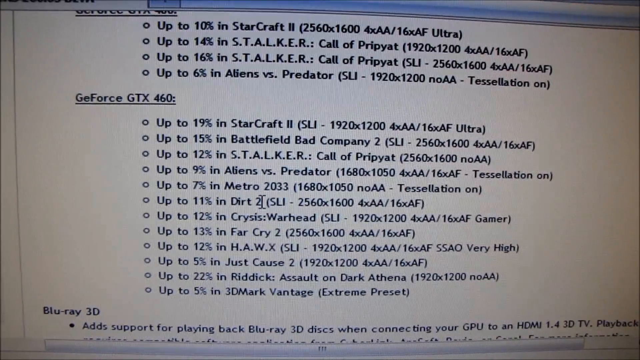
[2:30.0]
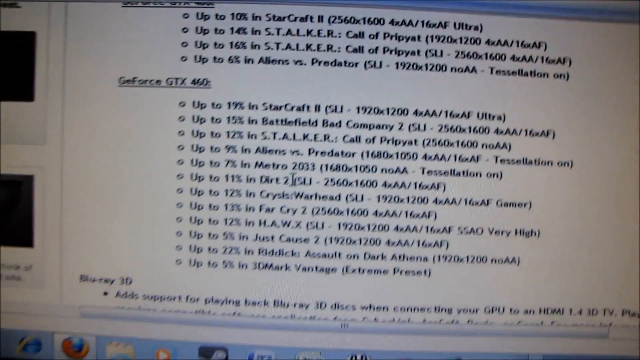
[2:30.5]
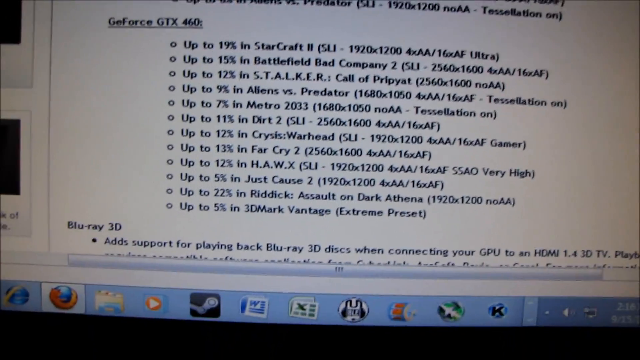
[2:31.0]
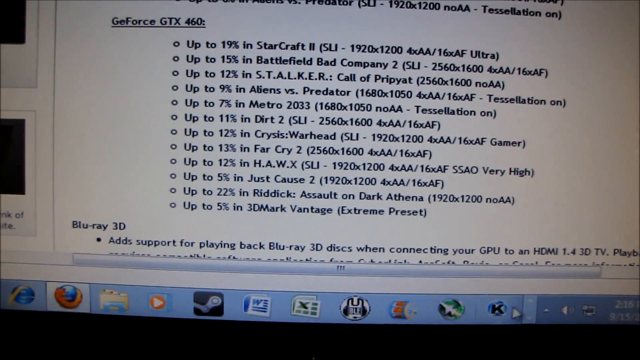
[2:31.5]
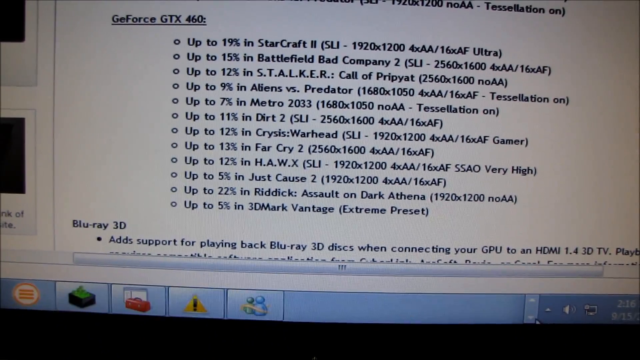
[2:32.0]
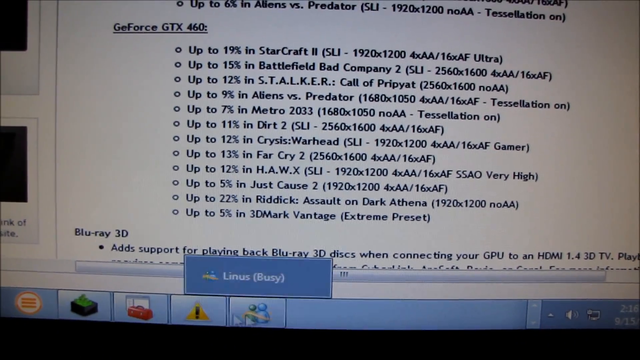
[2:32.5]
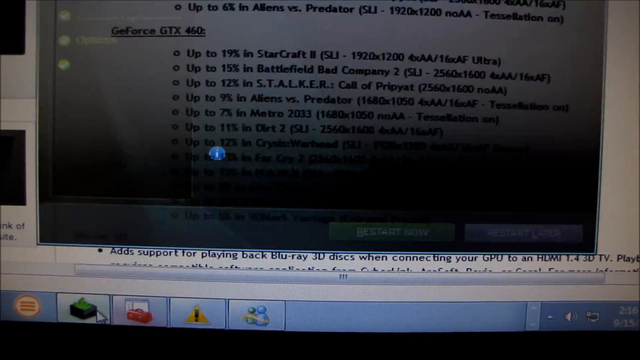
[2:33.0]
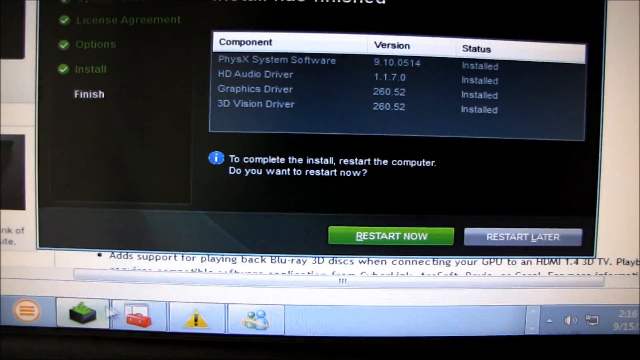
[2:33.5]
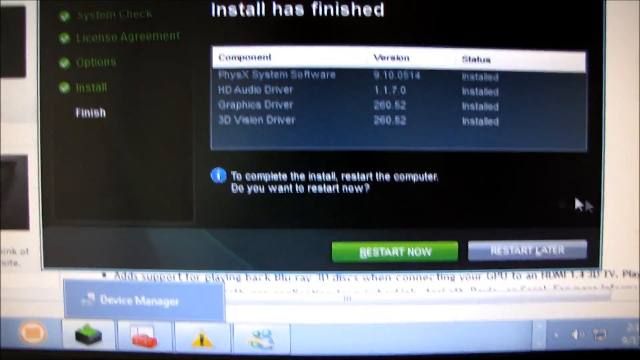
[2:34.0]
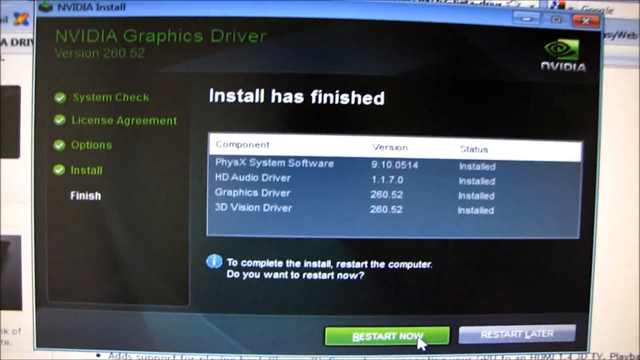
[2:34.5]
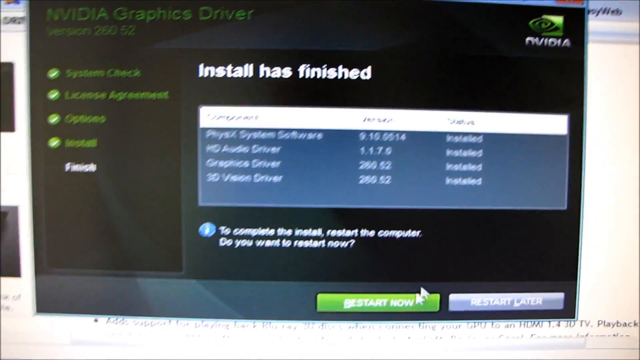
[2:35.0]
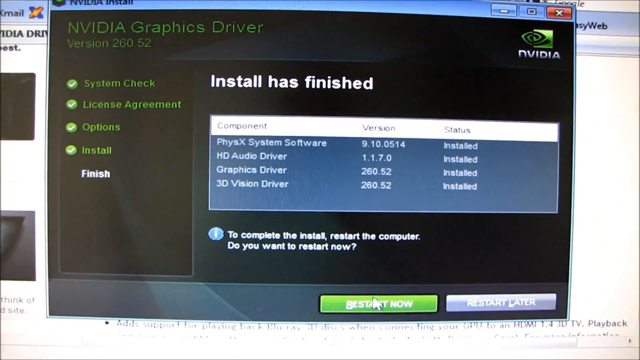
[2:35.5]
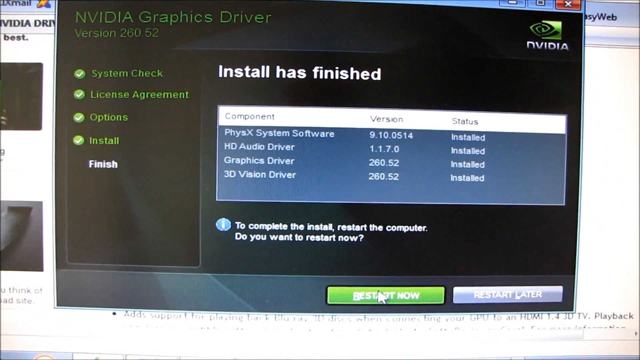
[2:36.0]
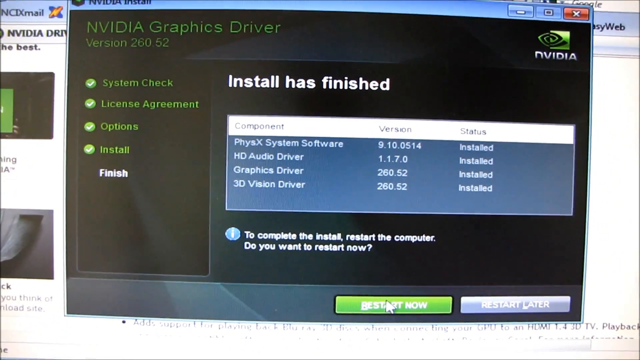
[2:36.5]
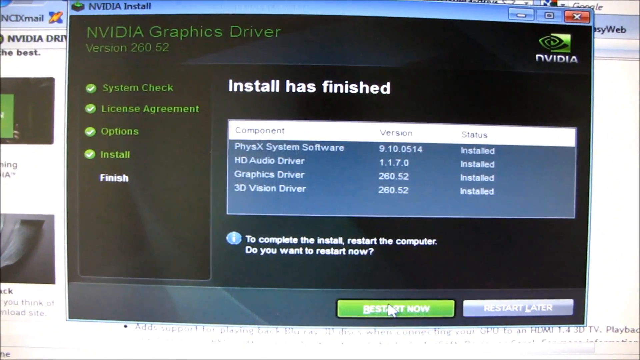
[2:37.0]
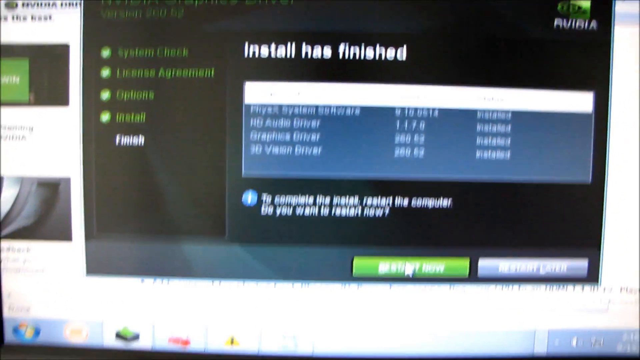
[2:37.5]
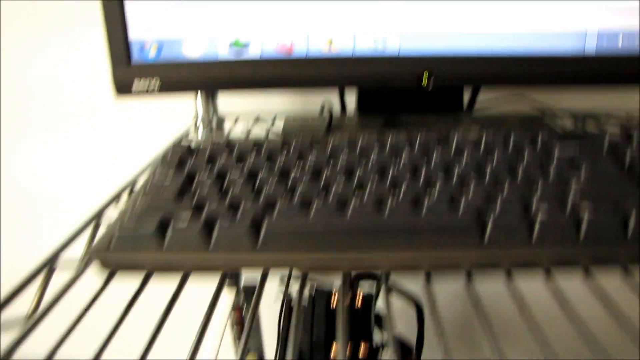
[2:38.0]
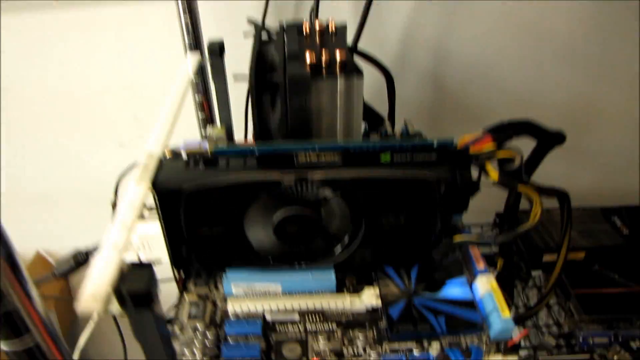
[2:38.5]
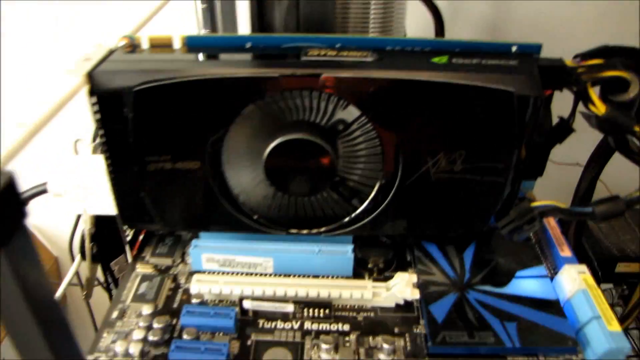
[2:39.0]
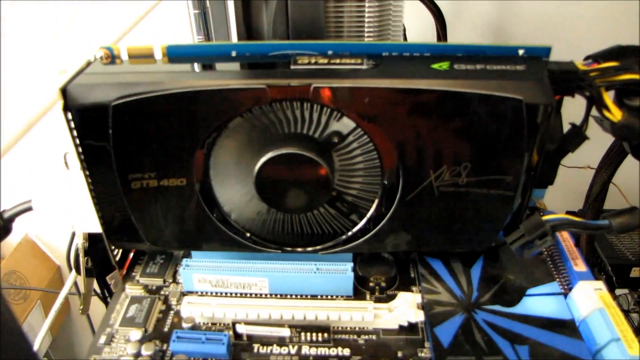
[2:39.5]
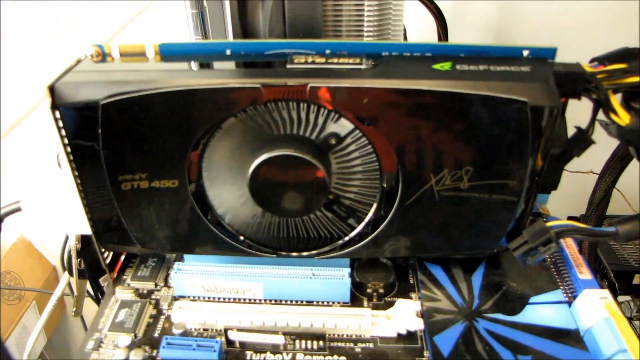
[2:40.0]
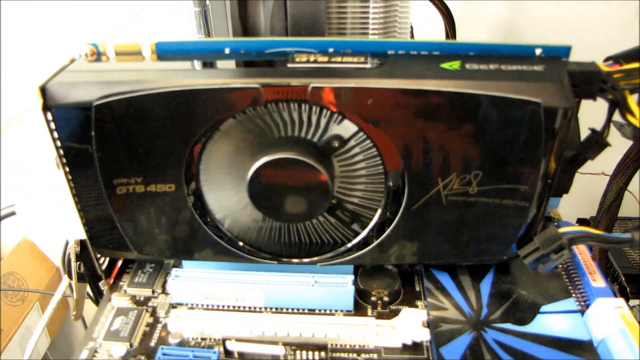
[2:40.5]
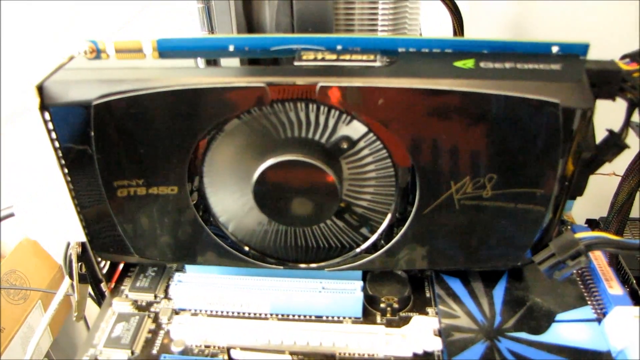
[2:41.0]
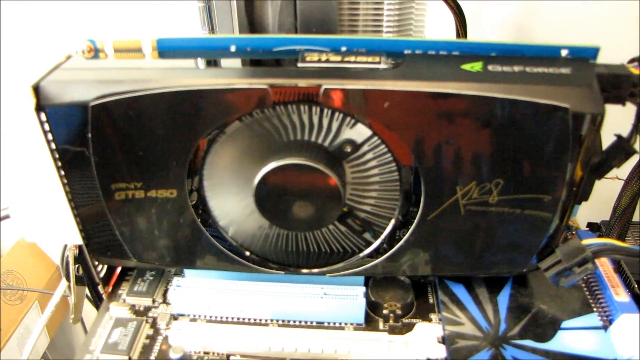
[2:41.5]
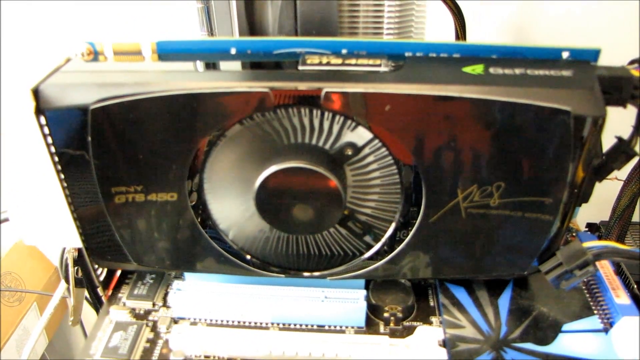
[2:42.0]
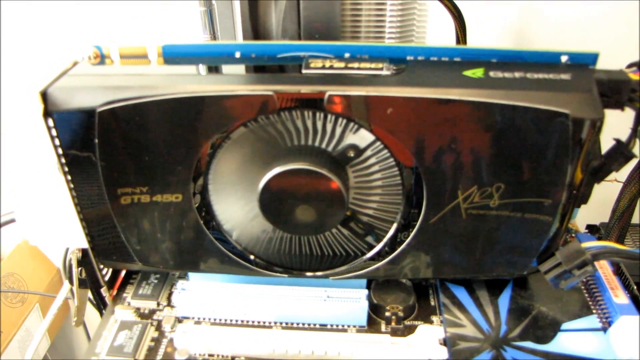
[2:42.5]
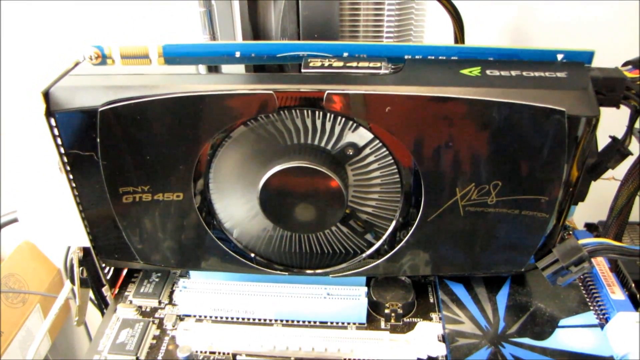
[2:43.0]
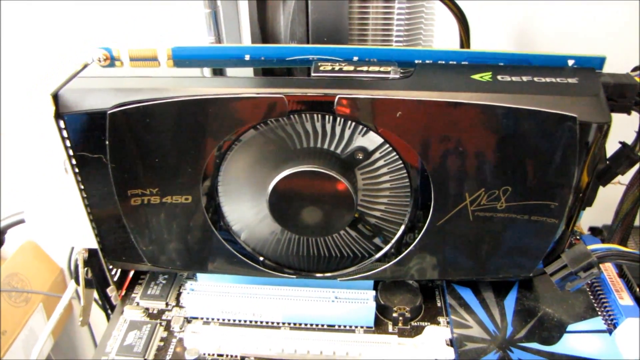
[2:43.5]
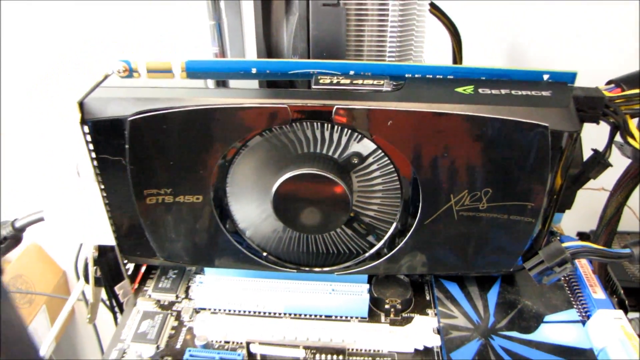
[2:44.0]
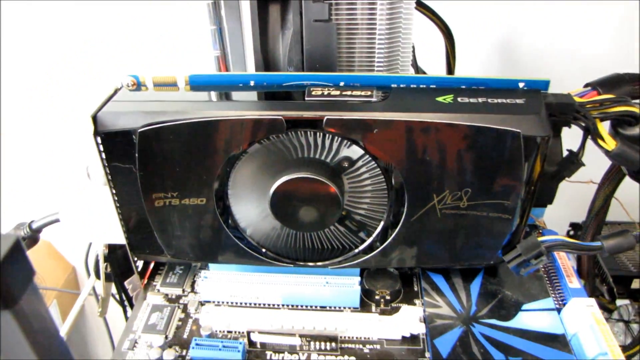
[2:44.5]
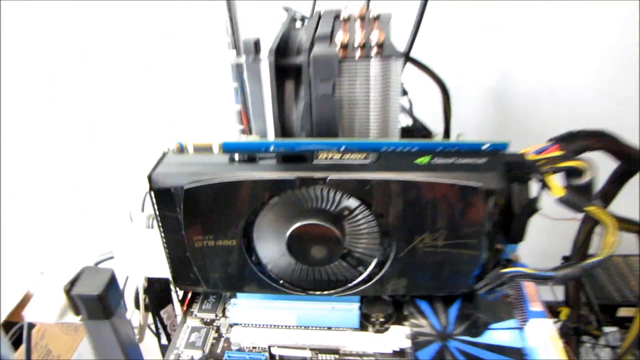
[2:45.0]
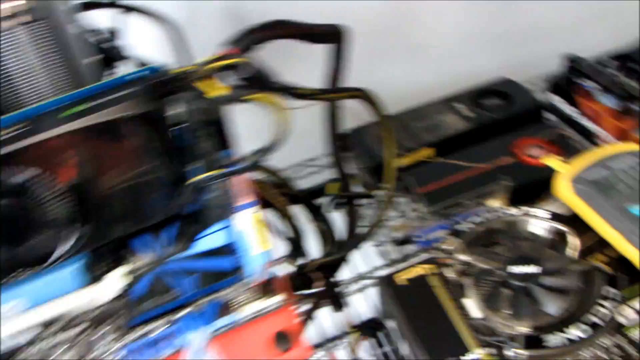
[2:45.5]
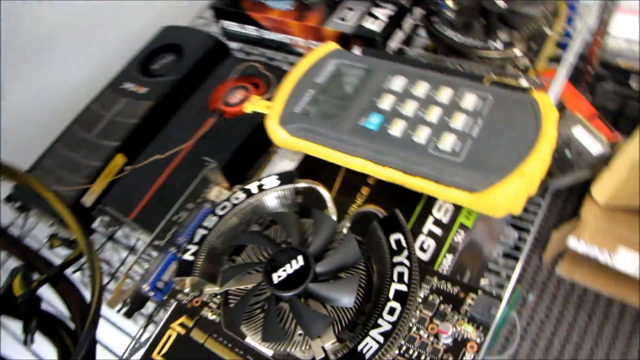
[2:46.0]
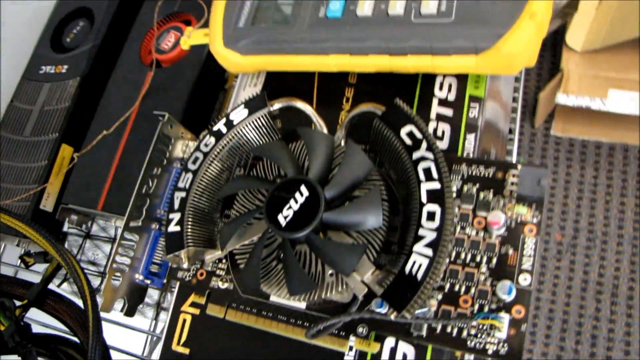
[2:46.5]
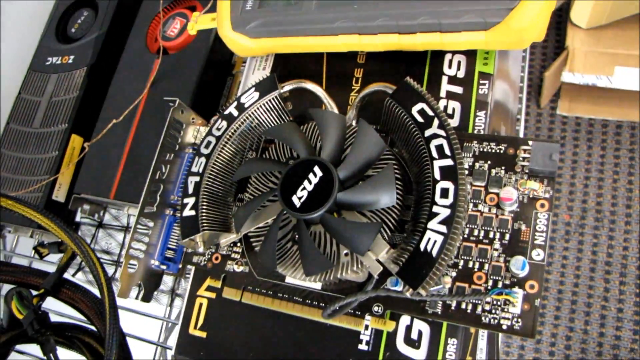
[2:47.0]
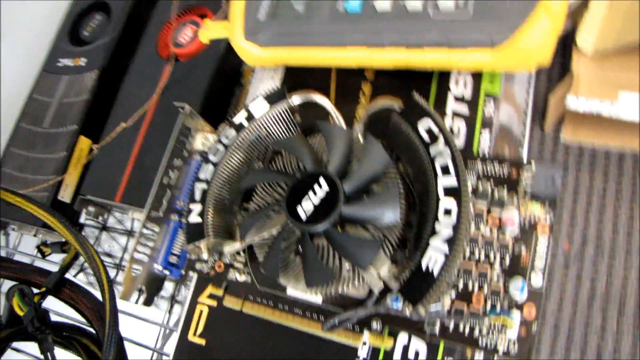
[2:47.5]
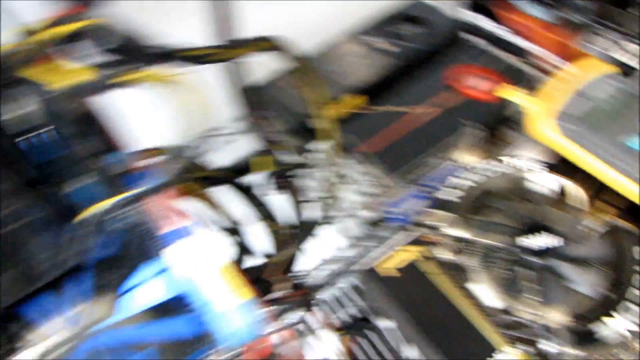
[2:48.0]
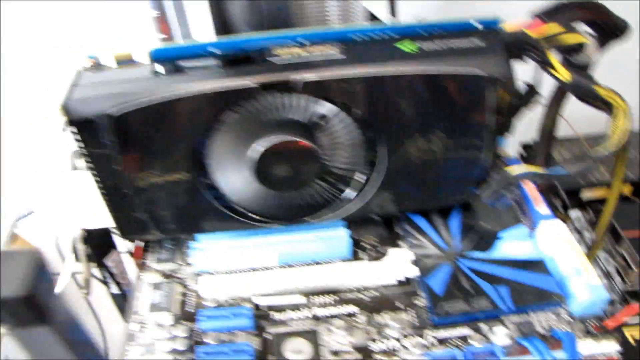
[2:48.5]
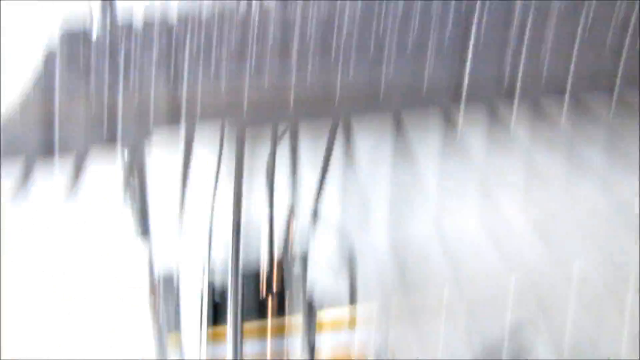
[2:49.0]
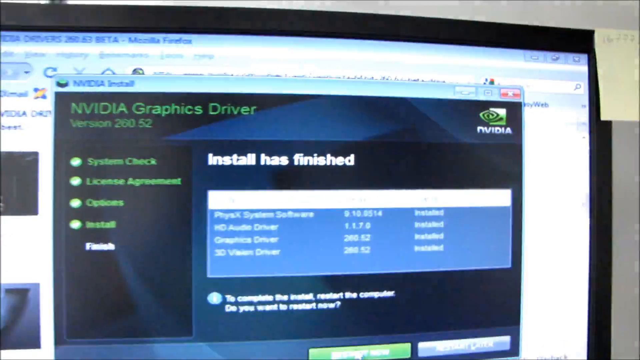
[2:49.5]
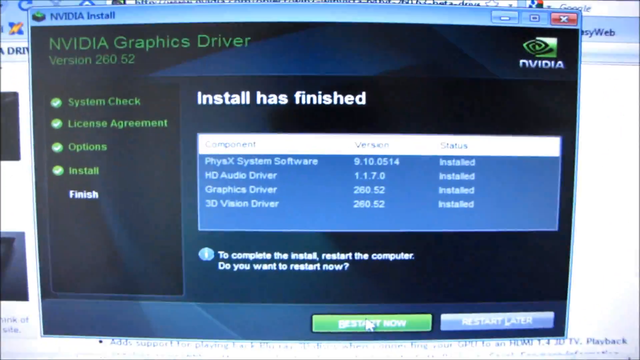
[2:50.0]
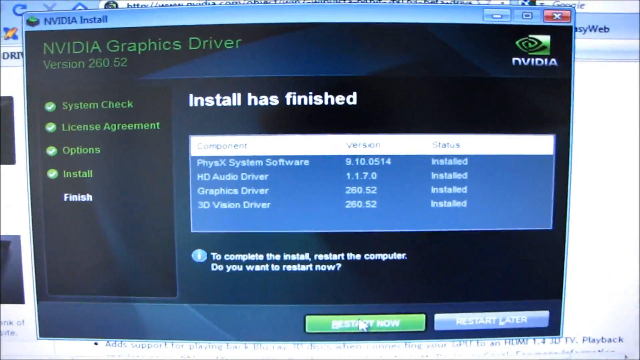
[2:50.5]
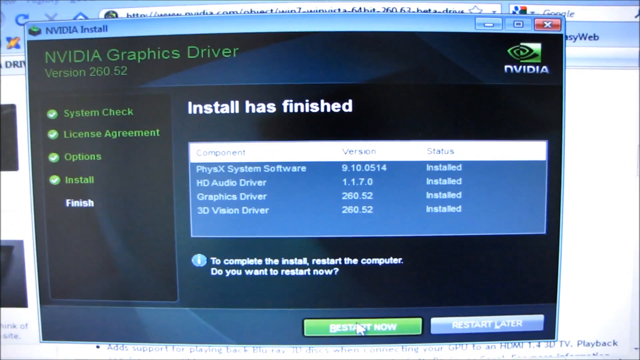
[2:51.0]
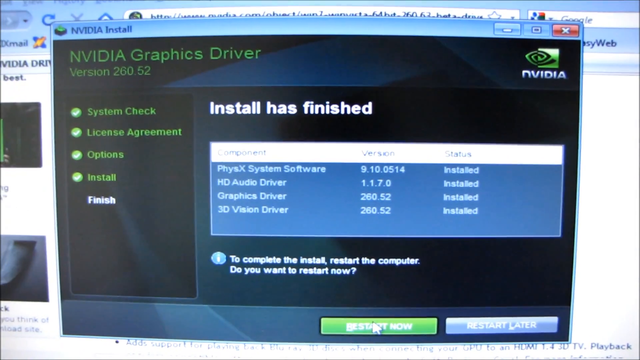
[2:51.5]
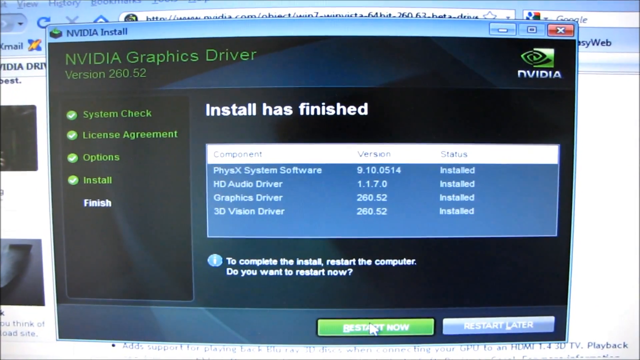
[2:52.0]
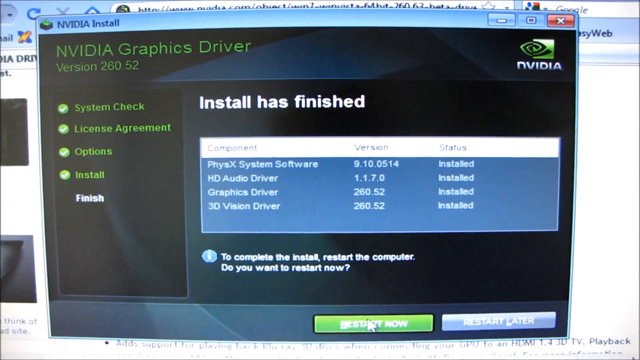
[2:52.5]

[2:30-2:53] The shot starts on the website, then the user looks at the taskbar and clicks the NVIDIA installation. The installer indicates that the install appears to have finished and that the computer needs to restart to complete it. He hovers the mouse over "restart now" but does not appear to click it. The camera pans down to the GTS450 hardware with the fan, which also seems to have a red light illuminated. The camera zooms in very close on it, then pans to the right to another piece of hardware with a large fan, bearing the code "N45OGTS" and, on the other side, the word "CYCLONE". Like the first piece, it appears to have an exposed circuit board to its left and right, with wires connecting the fan to the circuit board. This second piece does not look connected, and its fan has many more blades than the first one. The camera moves back up to the screen showing the install-finished window.